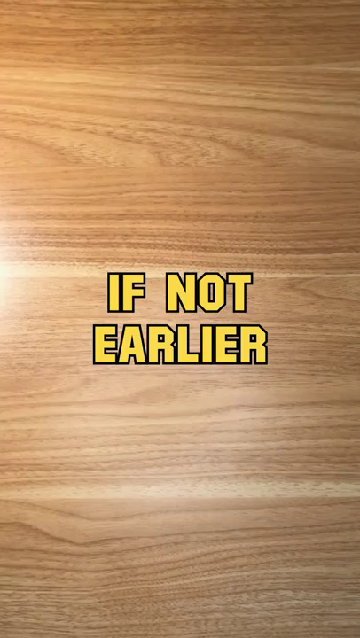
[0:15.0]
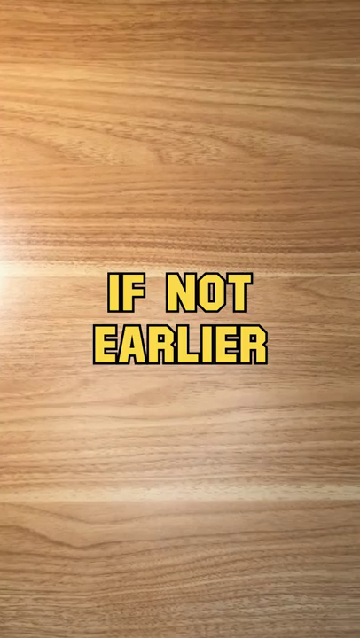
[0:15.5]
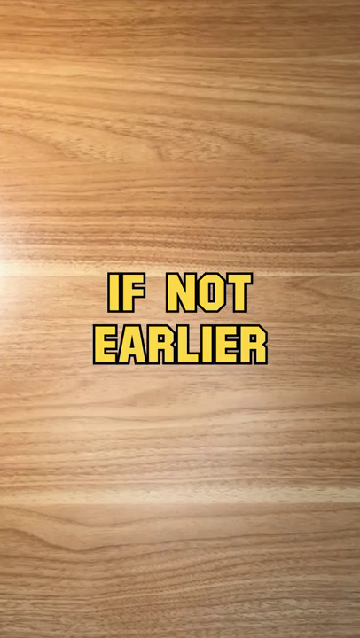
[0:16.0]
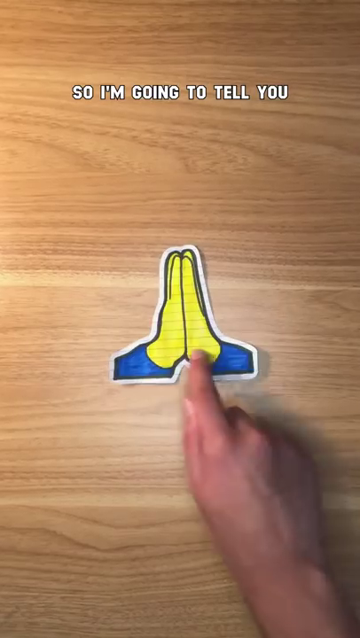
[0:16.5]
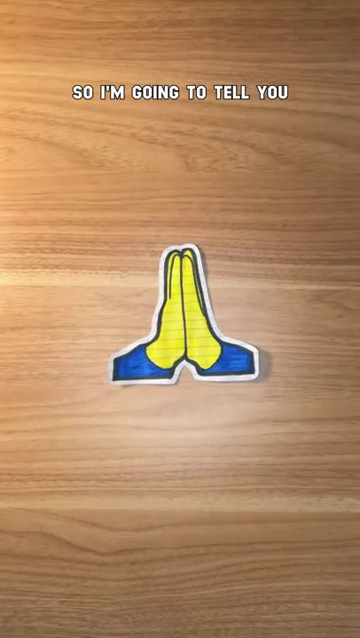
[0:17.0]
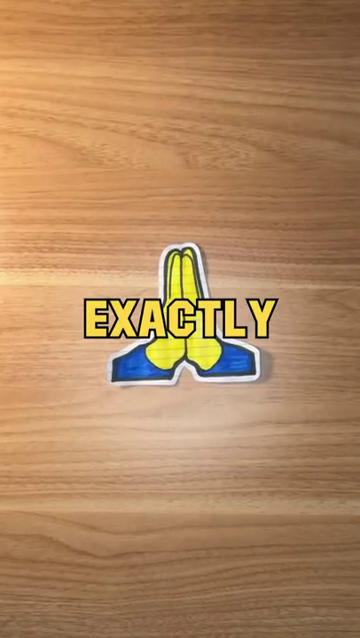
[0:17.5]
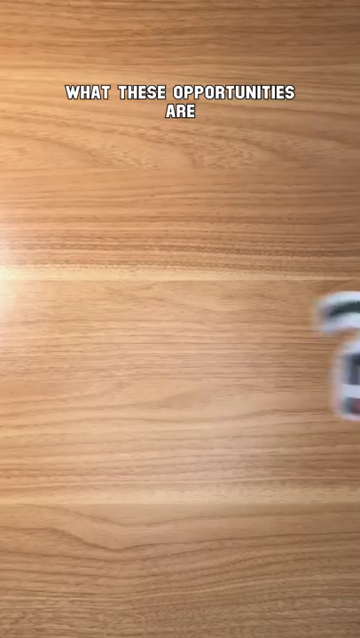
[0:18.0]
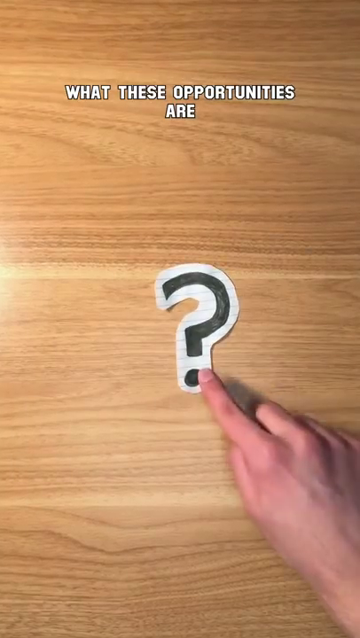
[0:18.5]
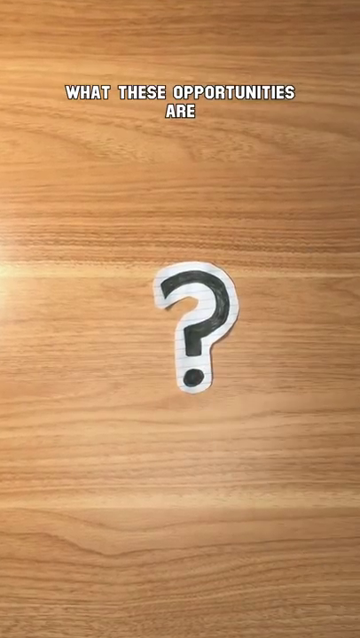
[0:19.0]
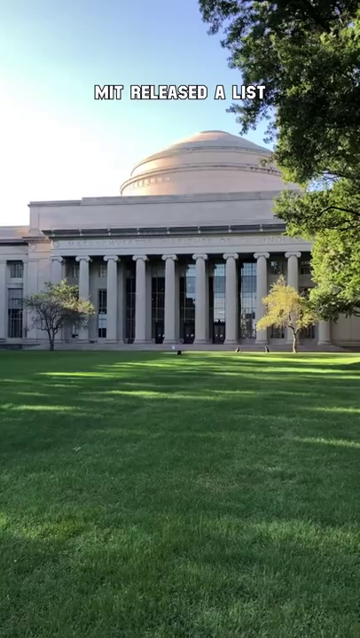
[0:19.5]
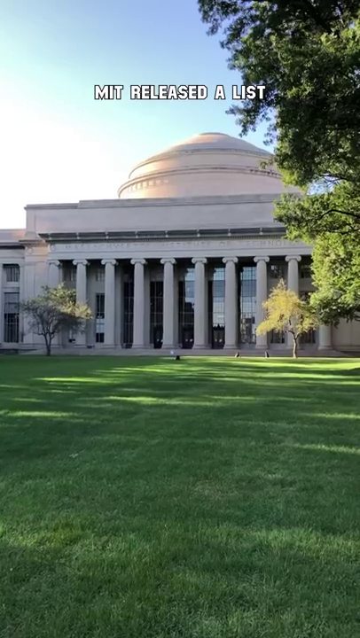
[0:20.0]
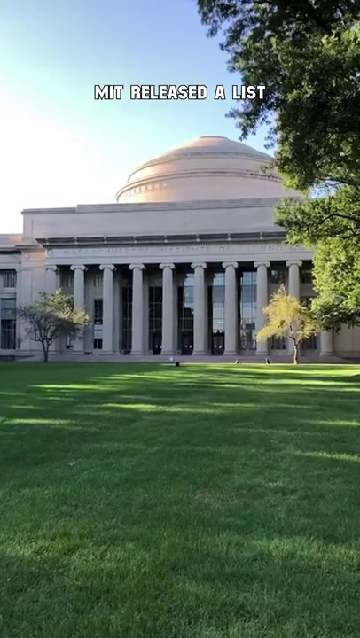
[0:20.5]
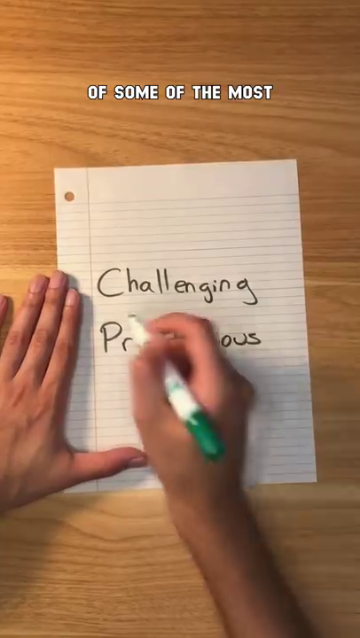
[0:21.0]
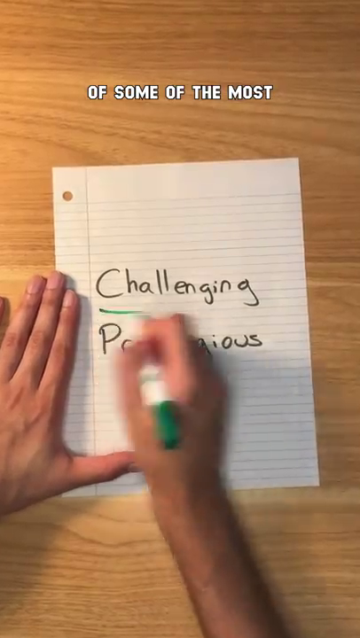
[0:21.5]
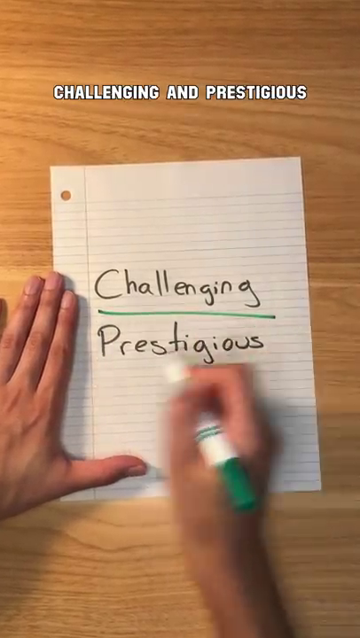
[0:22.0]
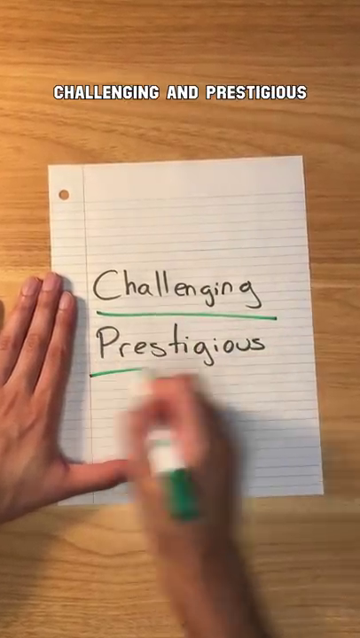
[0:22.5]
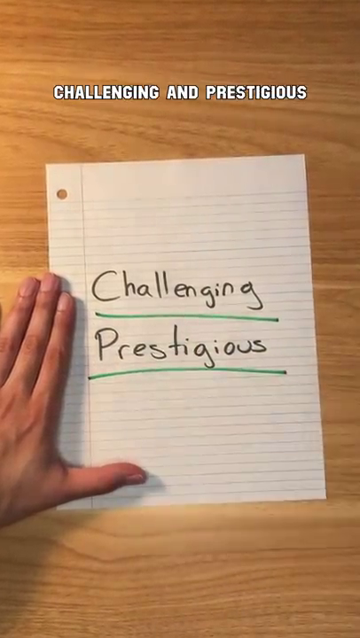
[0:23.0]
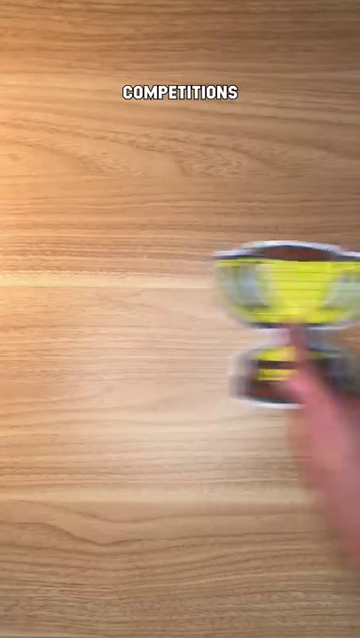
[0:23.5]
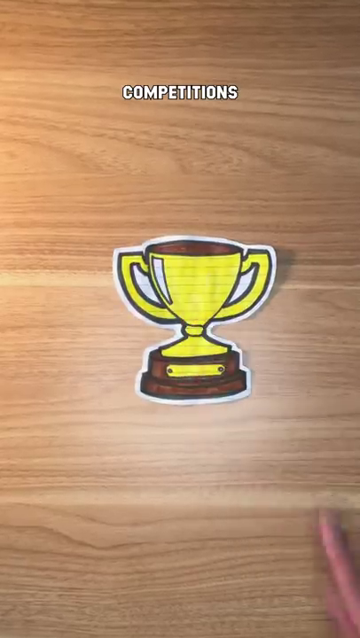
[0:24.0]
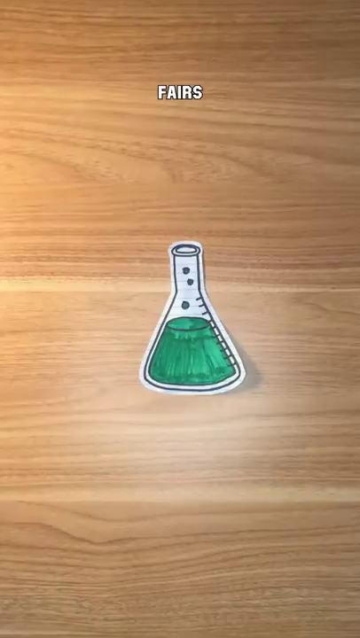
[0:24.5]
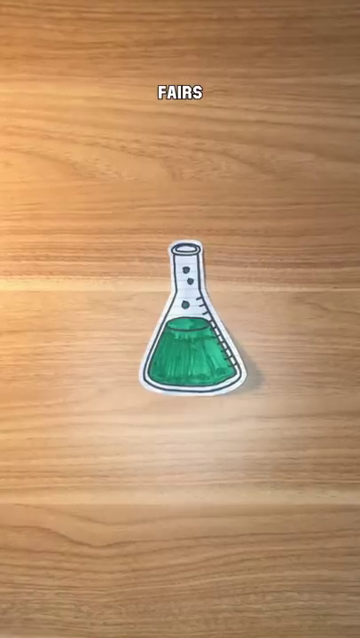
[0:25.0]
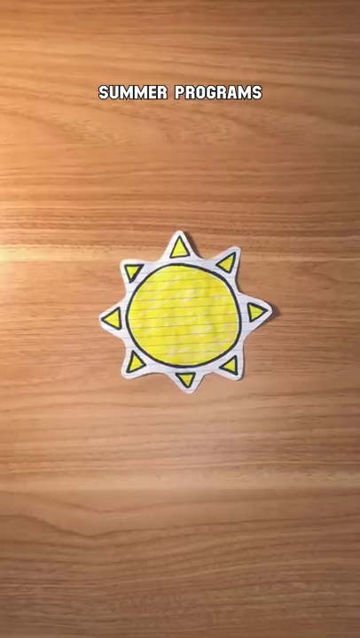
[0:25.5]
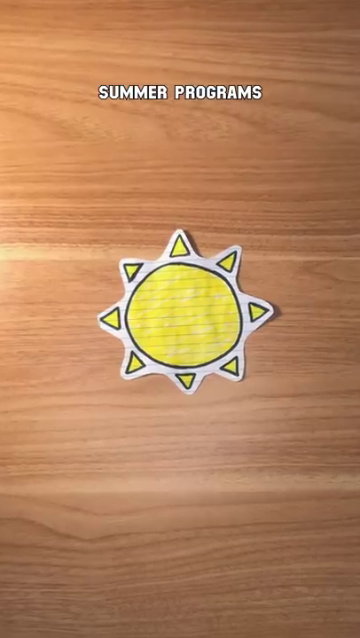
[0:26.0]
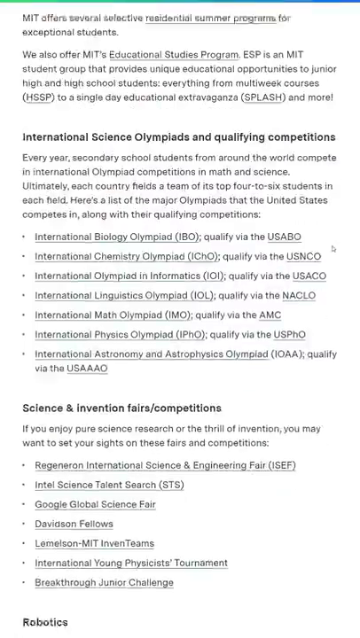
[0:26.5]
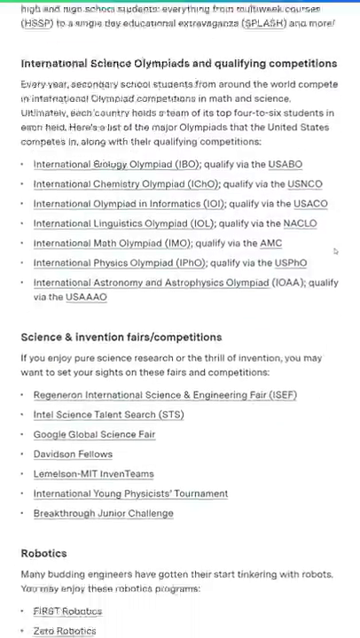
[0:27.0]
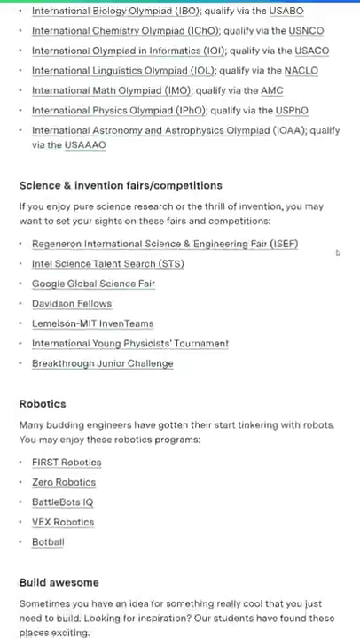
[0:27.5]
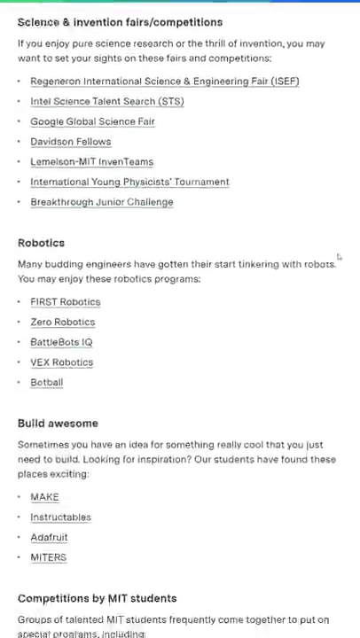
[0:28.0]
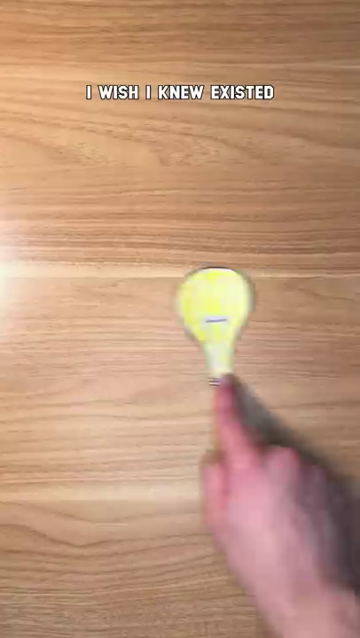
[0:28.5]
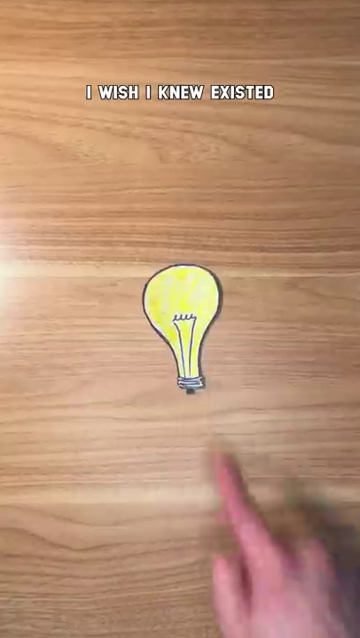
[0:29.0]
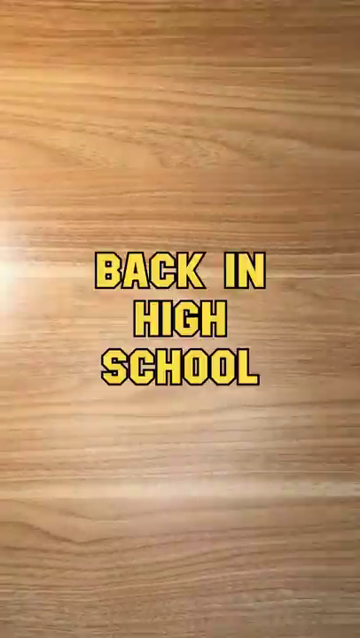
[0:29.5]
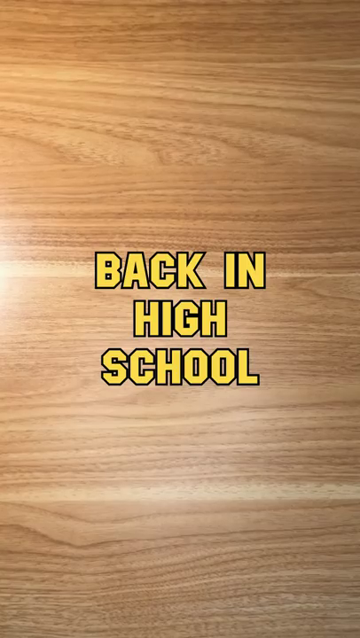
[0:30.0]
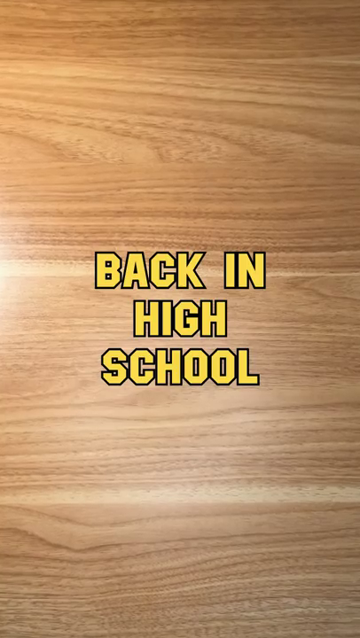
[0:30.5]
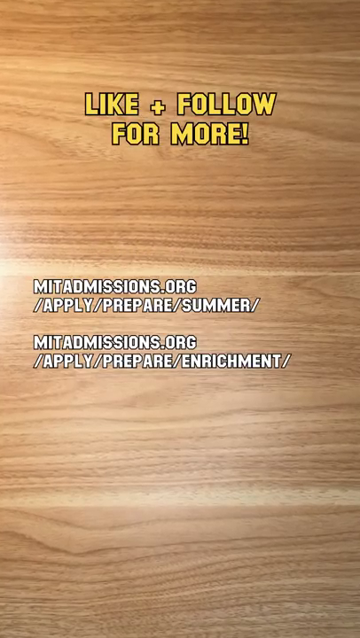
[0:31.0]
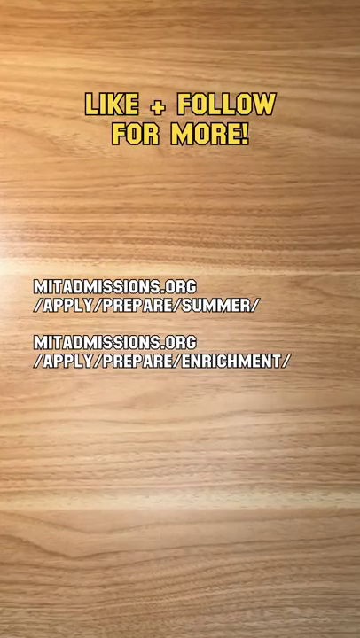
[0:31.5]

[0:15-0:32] Big bold letters read "if not earlier," and praying hands appear with the text "so I'm going to tell you exactly what these opportunities are." A little question mark follows, then a kind of government building with columns, with bold white text reading "MIT released a list of some of the most challenging and prestigious." A paper shows "challenging and prestigious competitions," followed by a little trophy and the words "fairs, summer programs, I wish I knew existed back in high school." Text then reads something like "plus follow for more," and two links appear: "mitadmissions.org/apply/prepare/summer" and then "mitadmissions.org/apply/prepare/enrichment." Captions appear at the top of the video and sometimes in the middle, and a hand slides different items into the video to illustrate the message.